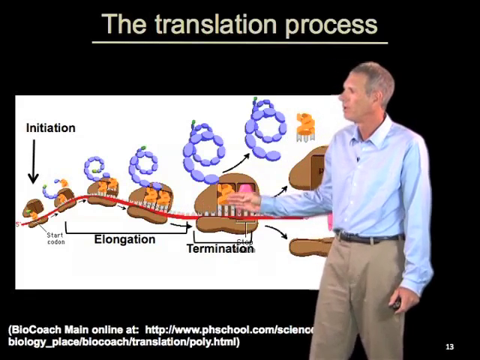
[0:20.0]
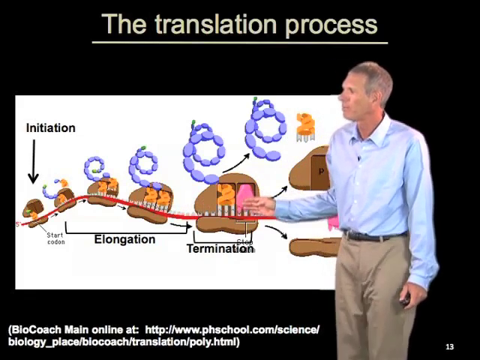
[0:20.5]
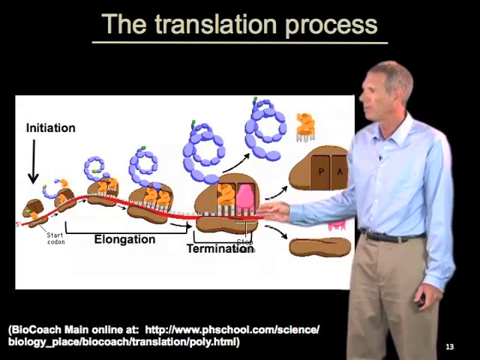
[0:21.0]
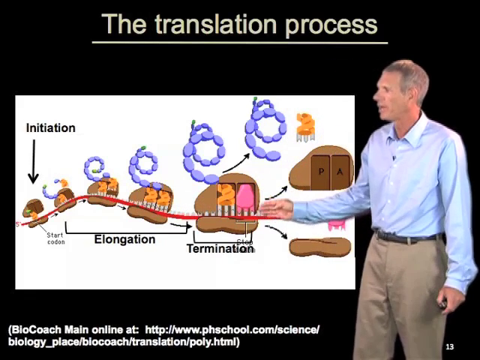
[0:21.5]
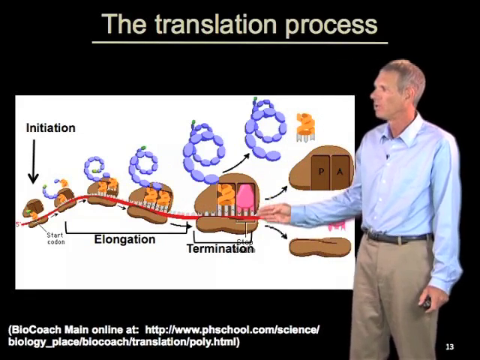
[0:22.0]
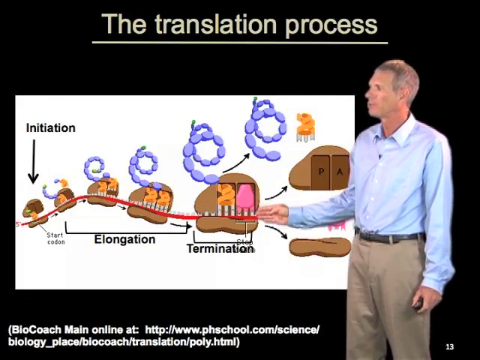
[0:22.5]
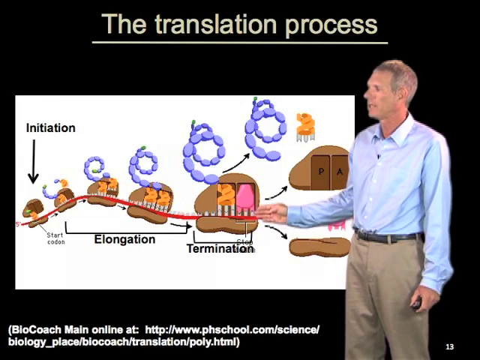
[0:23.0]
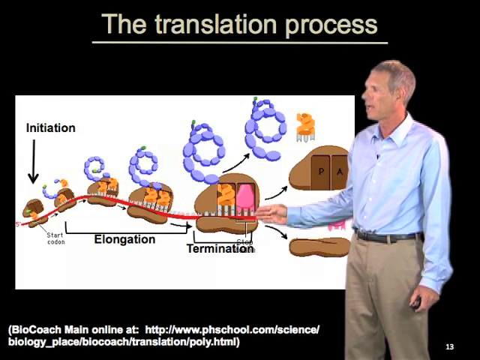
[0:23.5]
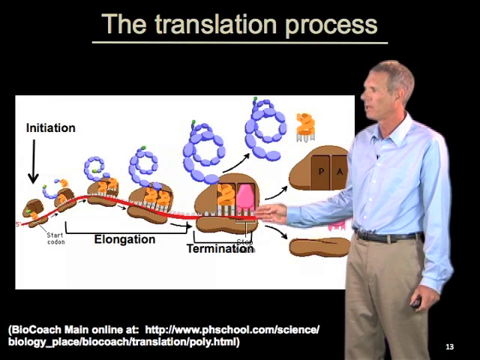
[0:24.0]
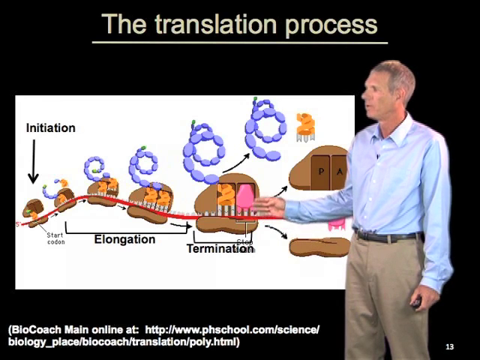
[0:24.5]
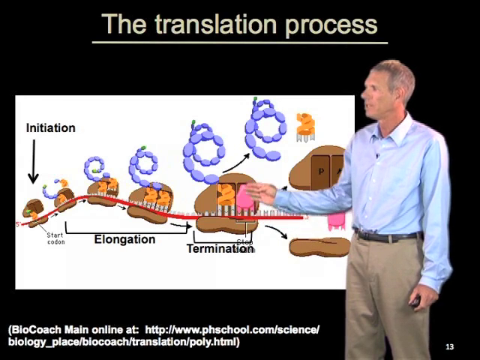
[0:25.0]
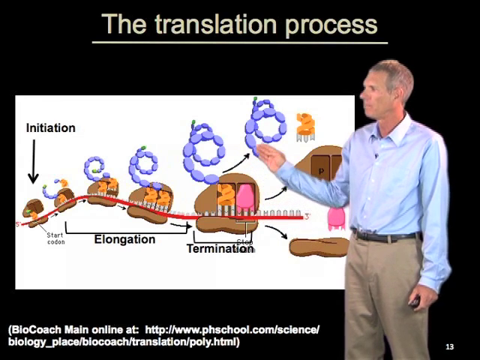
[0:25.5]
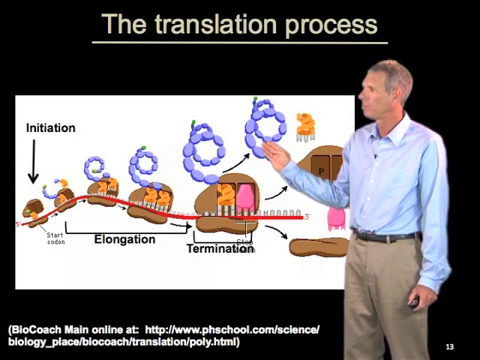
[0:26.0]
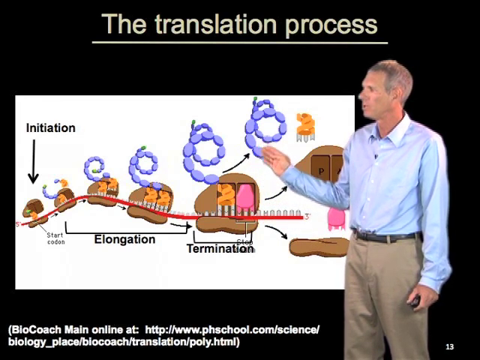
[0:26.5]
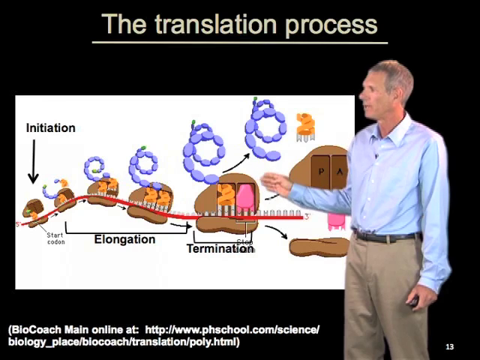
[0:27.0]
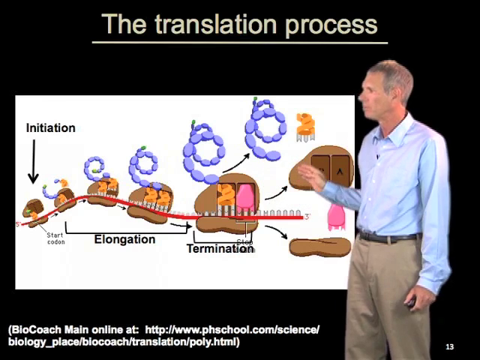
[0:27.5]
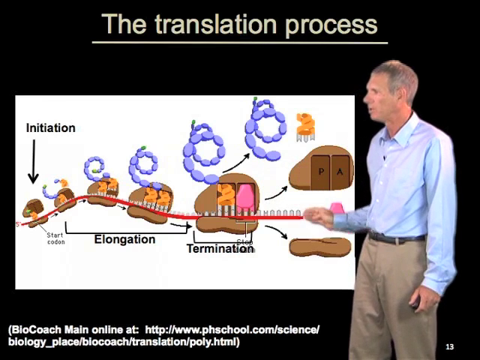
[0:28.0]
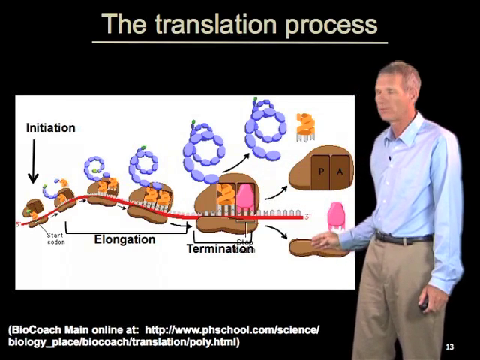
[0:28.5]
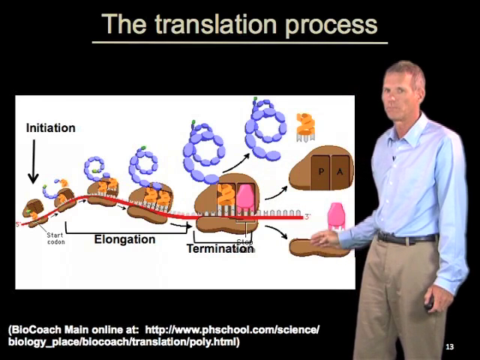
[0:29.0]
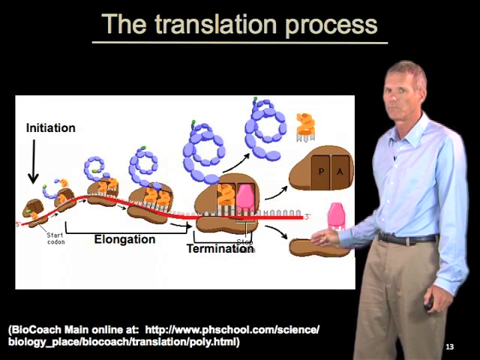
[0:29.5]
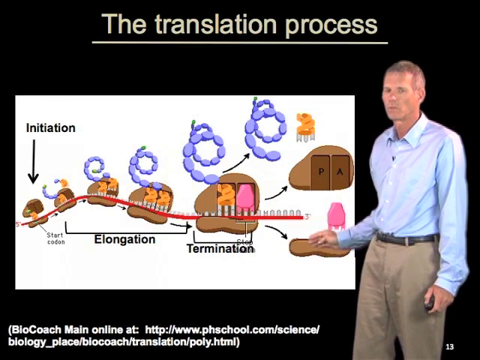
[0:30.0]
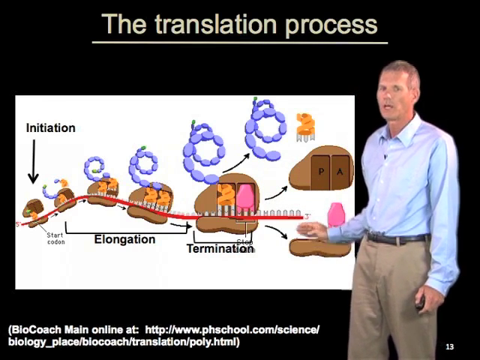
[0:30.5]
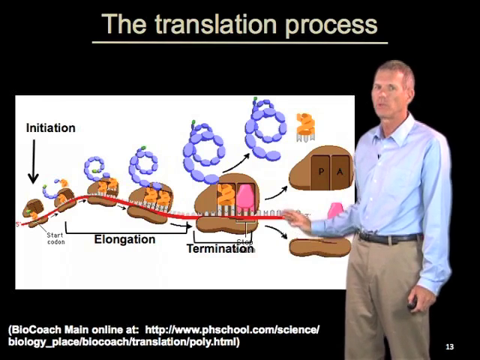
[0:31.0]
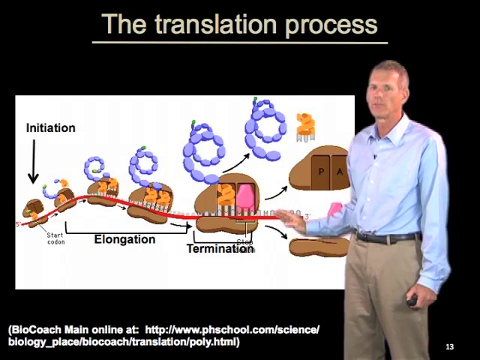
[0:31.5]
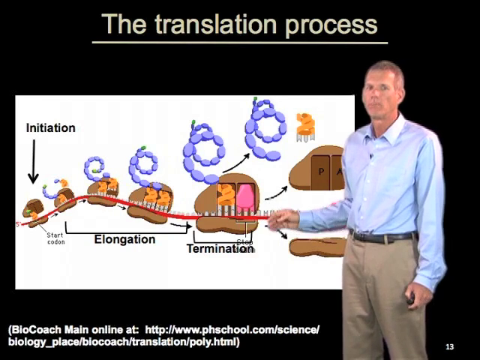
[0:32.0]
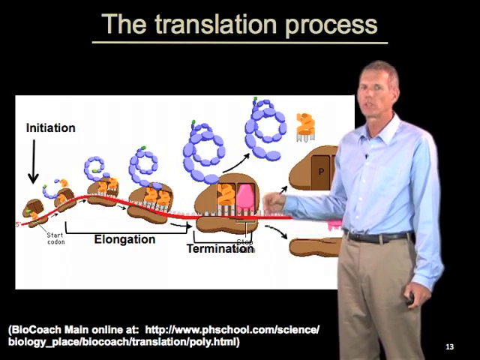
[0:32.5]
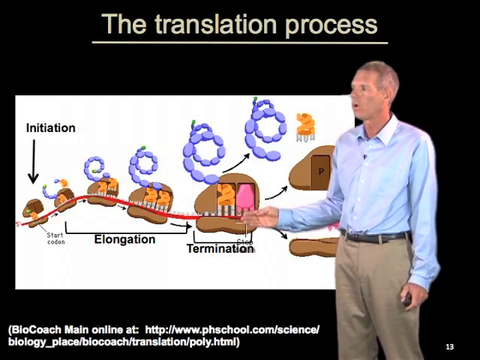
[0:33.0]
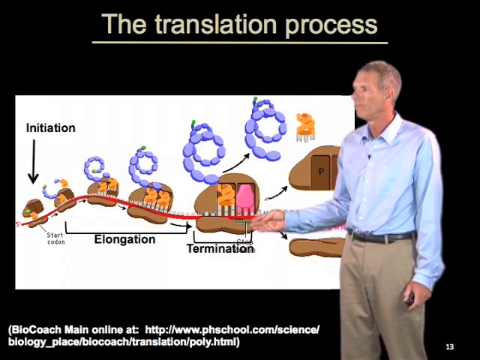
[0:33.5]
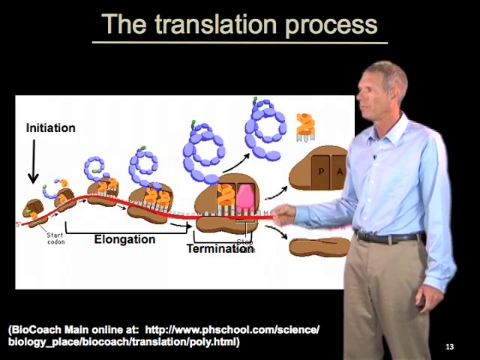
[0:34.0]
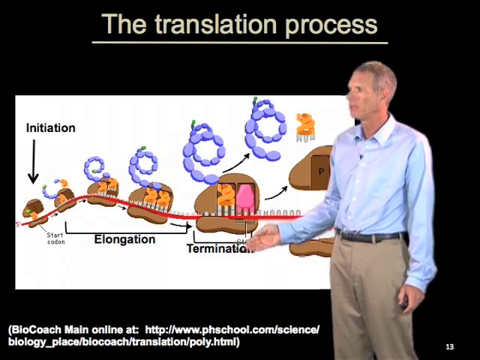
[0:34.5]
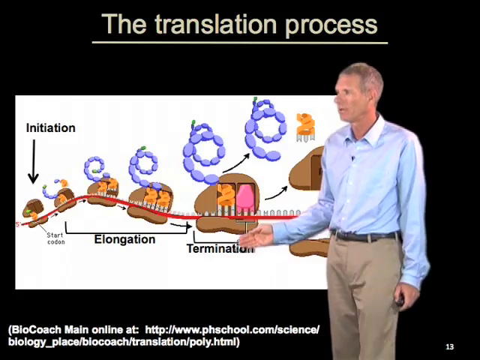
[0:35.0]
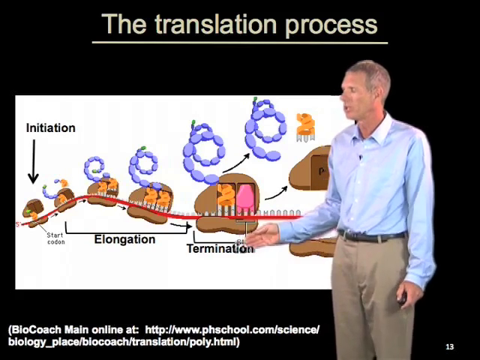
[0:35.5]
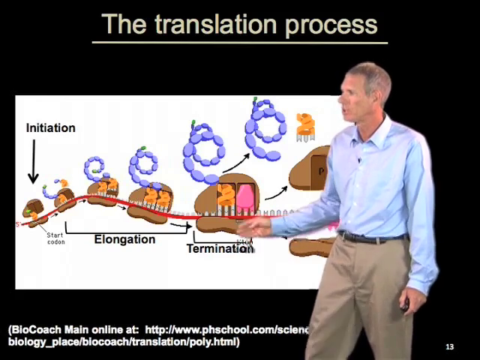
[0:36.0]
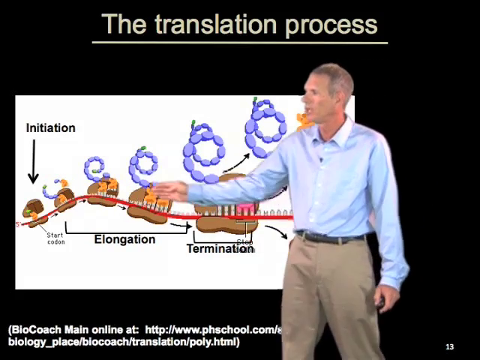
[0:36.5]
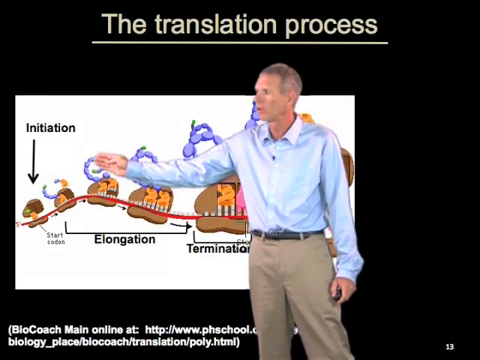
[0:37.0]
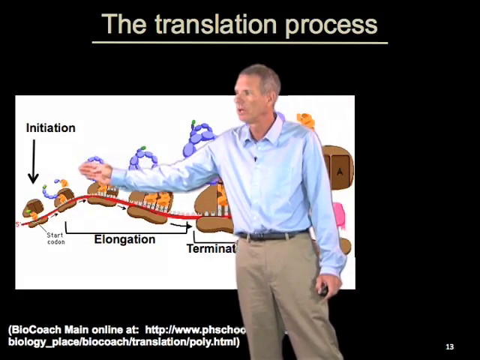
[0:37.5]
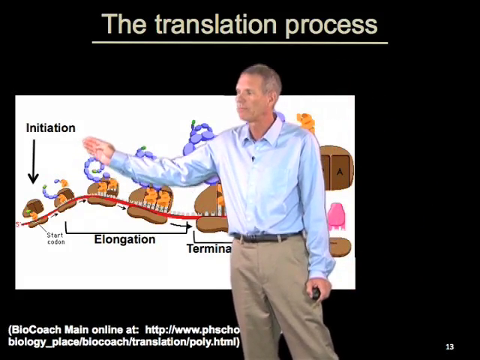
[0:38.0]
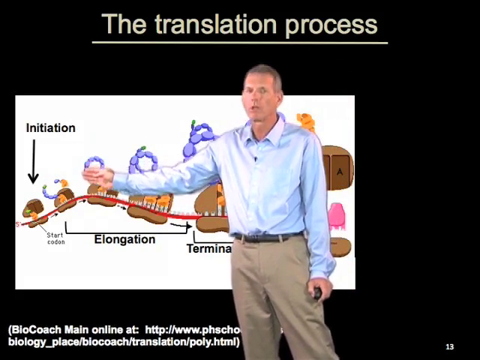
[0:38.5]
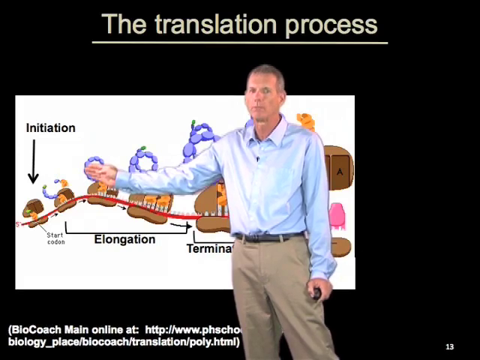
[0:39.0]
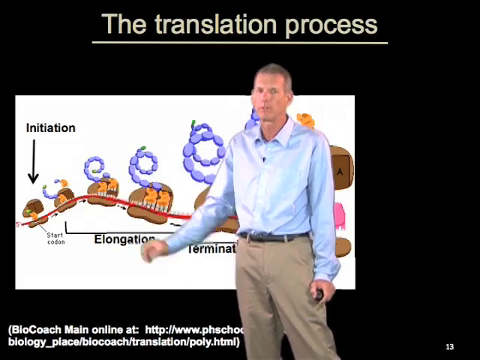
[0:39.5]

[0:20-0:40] The man in khaki pants and a long blue shirt presents the translation process, with the diagram's initiation, elongation and termination stages. He holds a clicker in his left hand and uses his right hand to point to each section. In the picture diagram, something small and brown gets a little bigger with some orange, and then a purple swirl thing appears. In the next picture it is doubled: two orange things inside the brown and a longer purple. In the following picture there are still two orange things inside the brown, almost like a bun, and a big, longer purple swirly thing with green on the end. At termination there is an orange one and a pink one, and the purple looks almost like purple sausage links with something green on the end, swirling around. An arrow shows it as though it leaves the brown bun thing. Part of the diagram behind the man cannot be seen. The brown thing has a P and an A; the orange goes up out of the P and the pink goes down out of the A. The brown thing is almost like a blow-up object, and once the orange and pink are gone it loses all its air.